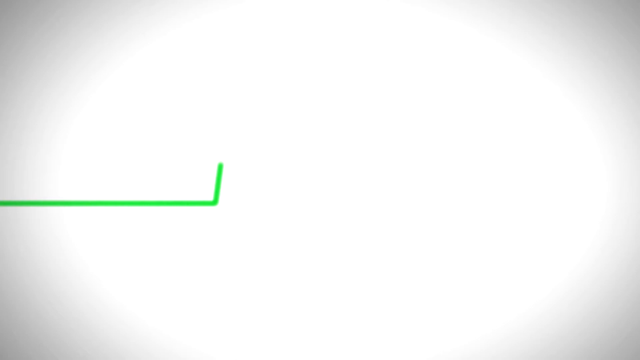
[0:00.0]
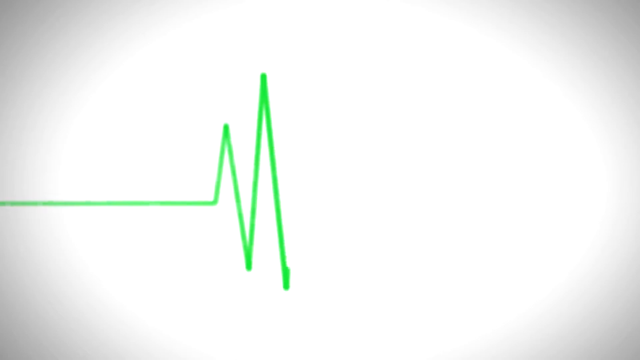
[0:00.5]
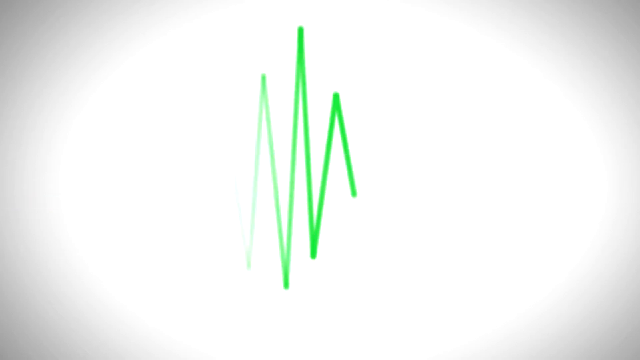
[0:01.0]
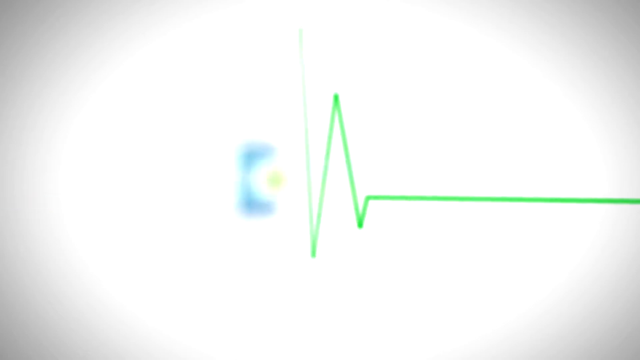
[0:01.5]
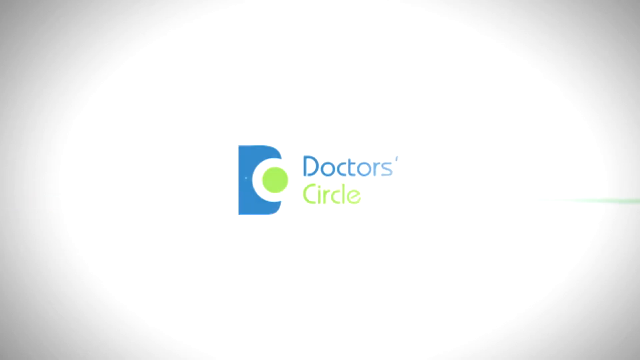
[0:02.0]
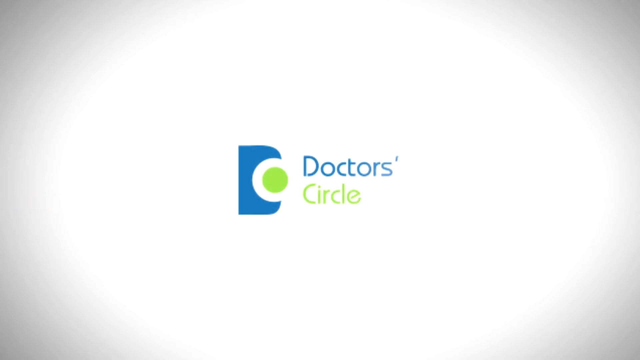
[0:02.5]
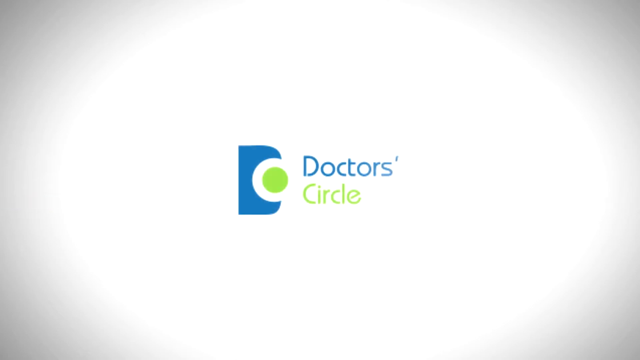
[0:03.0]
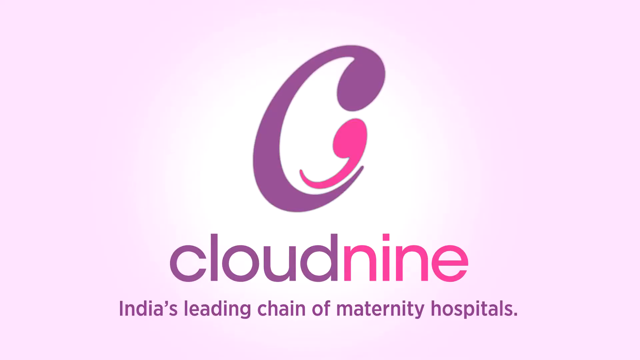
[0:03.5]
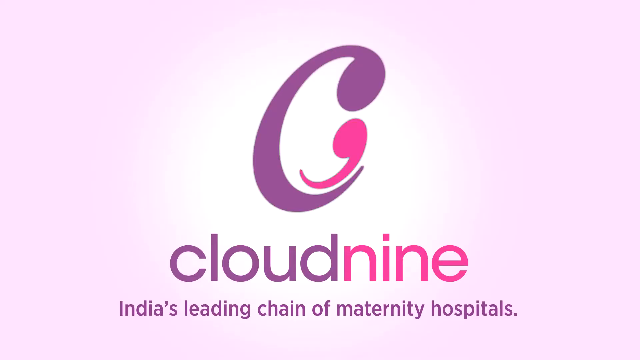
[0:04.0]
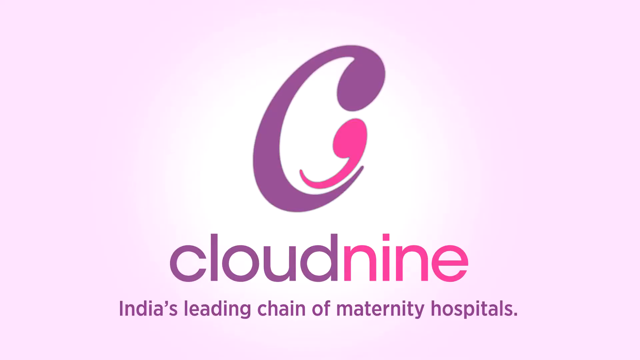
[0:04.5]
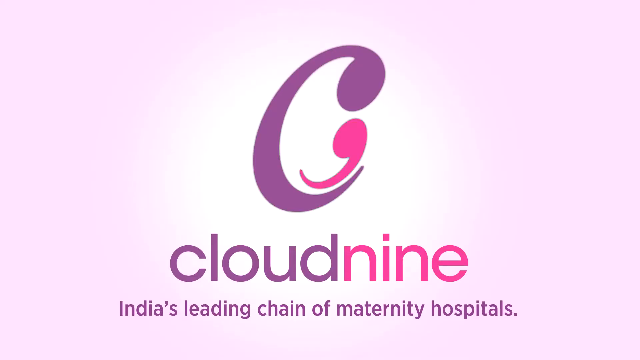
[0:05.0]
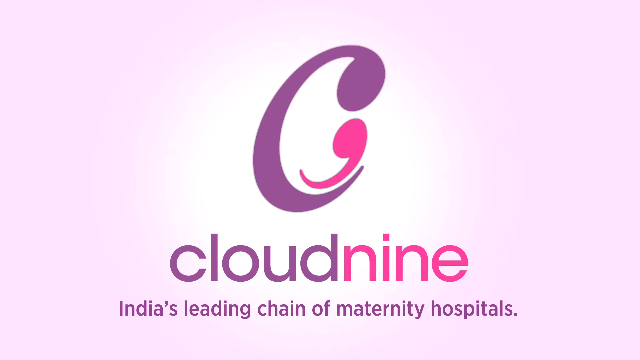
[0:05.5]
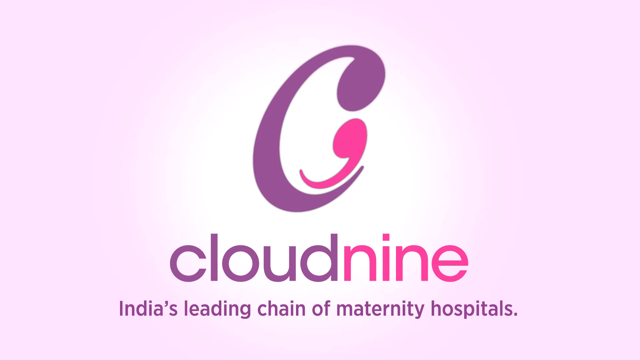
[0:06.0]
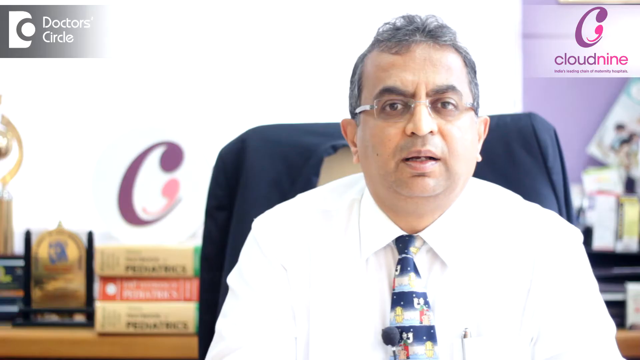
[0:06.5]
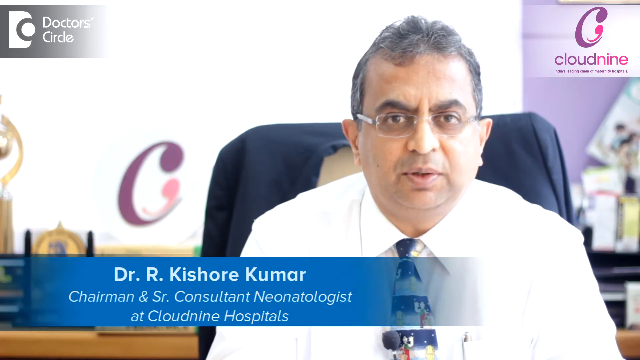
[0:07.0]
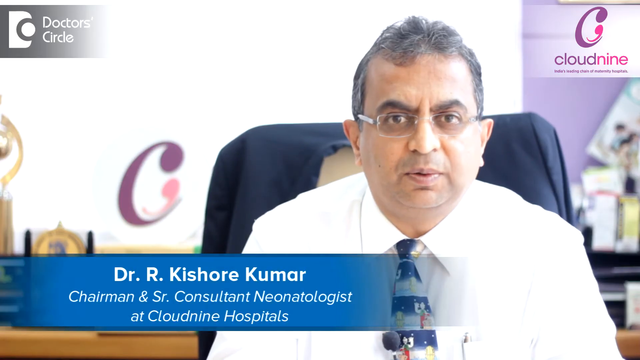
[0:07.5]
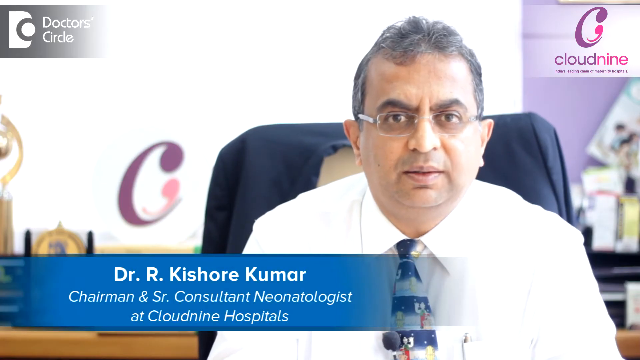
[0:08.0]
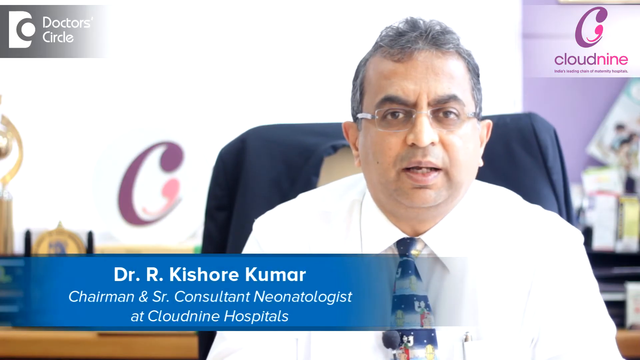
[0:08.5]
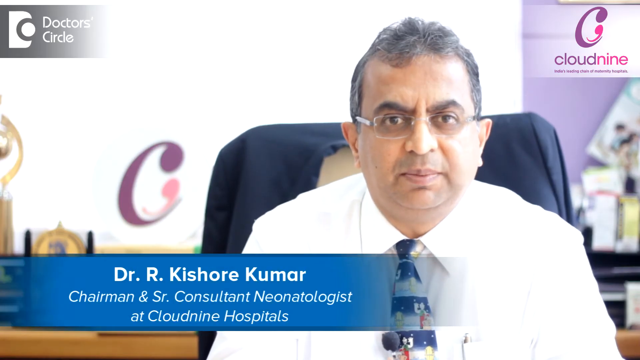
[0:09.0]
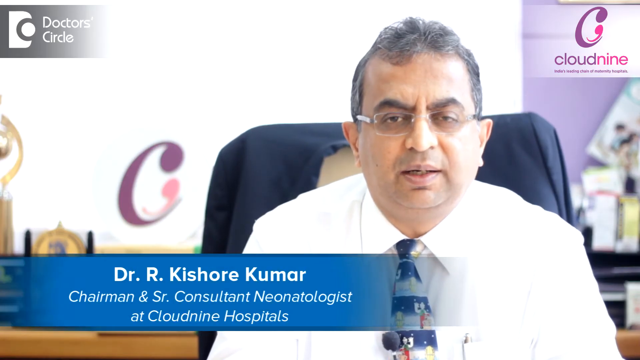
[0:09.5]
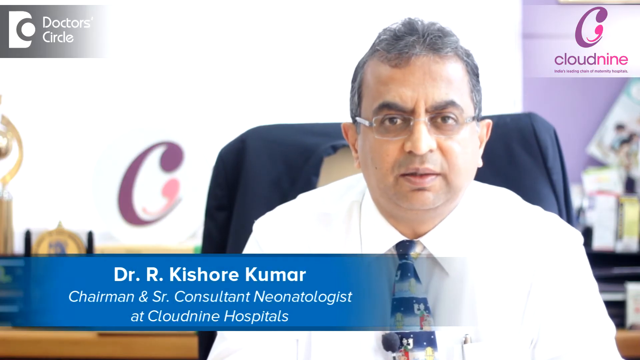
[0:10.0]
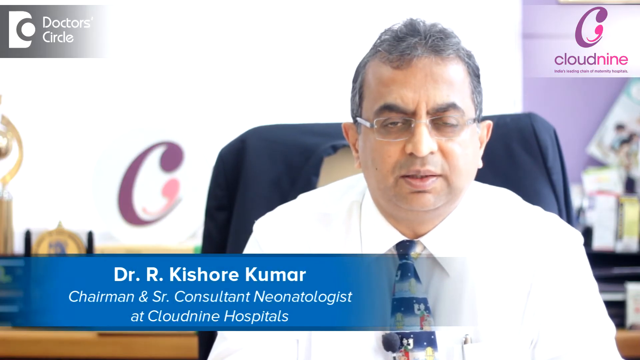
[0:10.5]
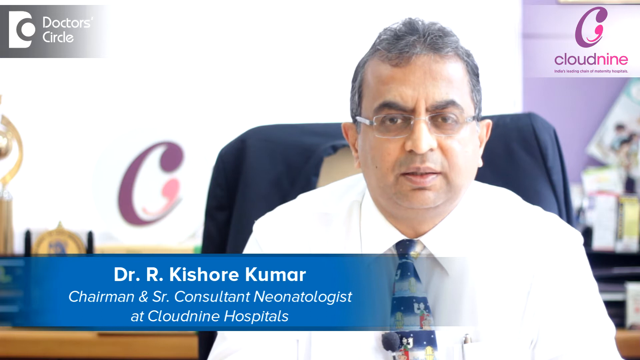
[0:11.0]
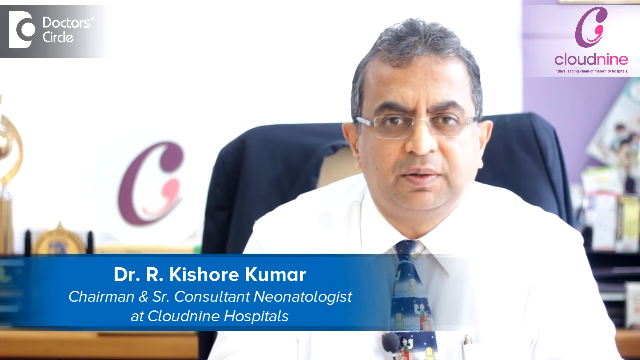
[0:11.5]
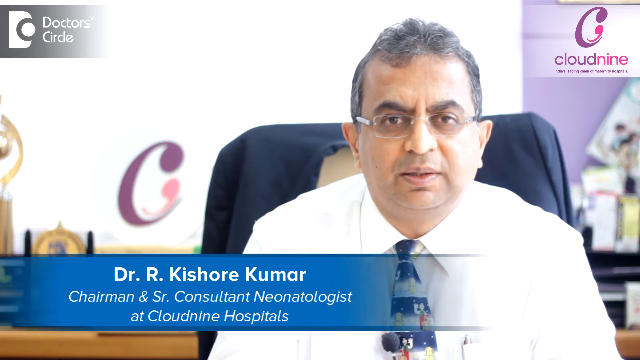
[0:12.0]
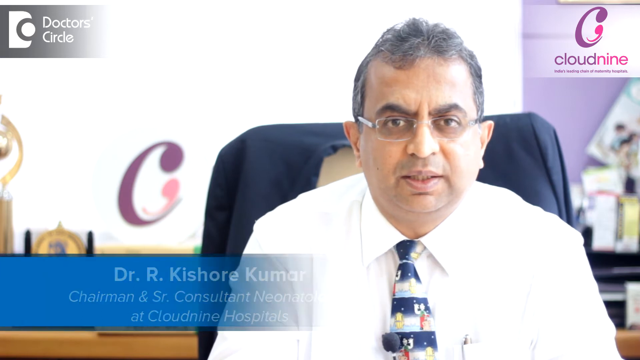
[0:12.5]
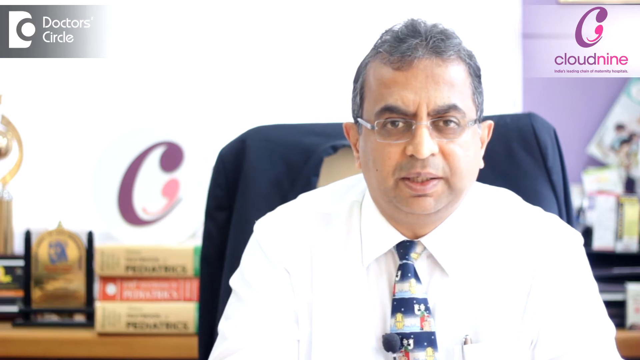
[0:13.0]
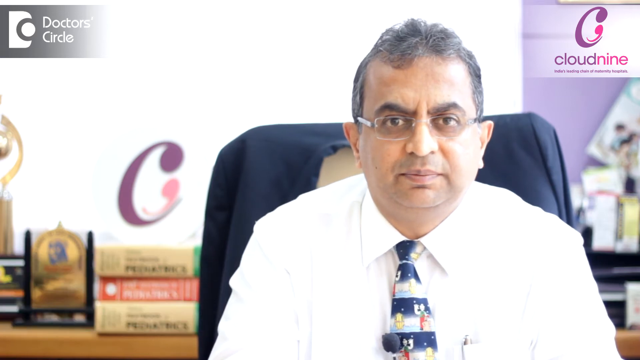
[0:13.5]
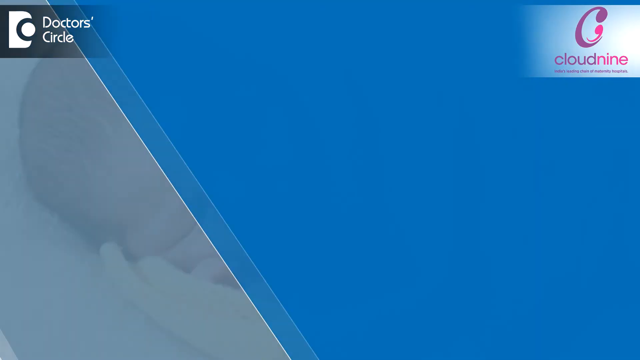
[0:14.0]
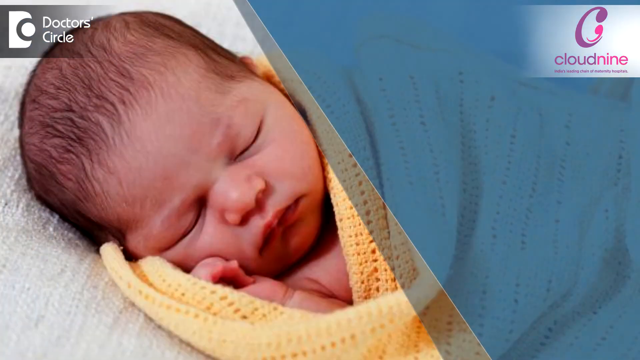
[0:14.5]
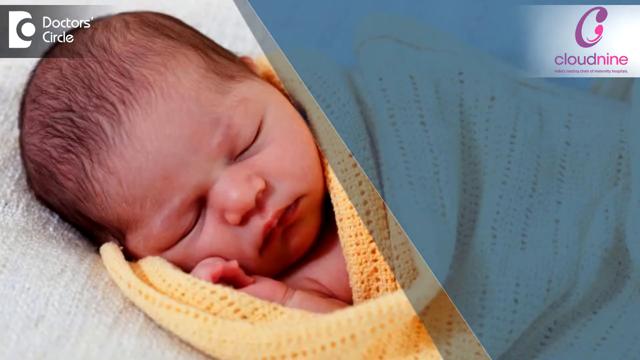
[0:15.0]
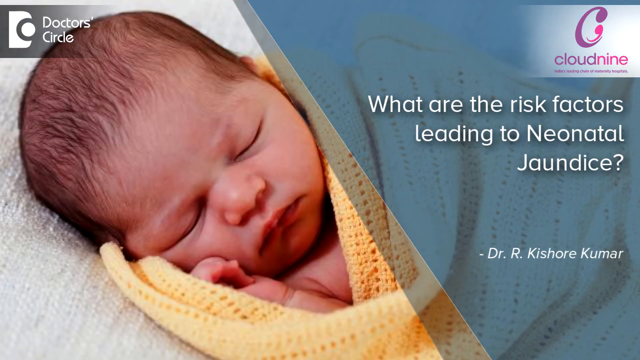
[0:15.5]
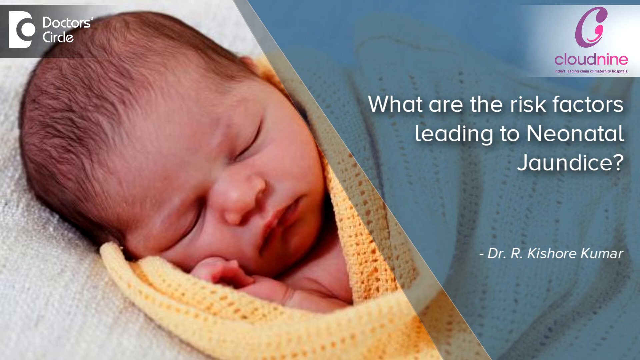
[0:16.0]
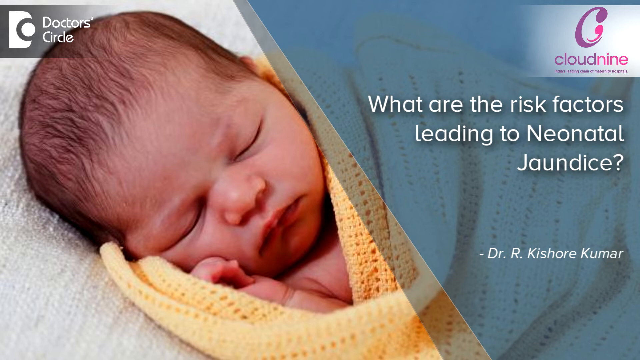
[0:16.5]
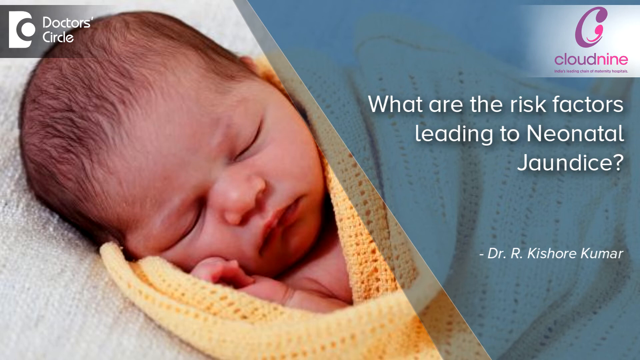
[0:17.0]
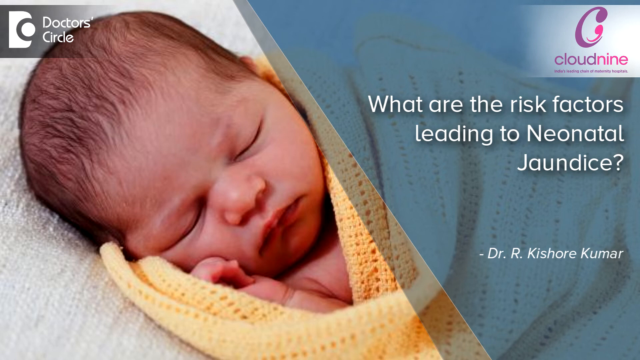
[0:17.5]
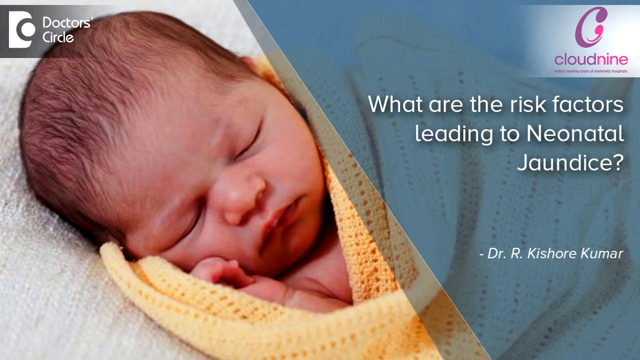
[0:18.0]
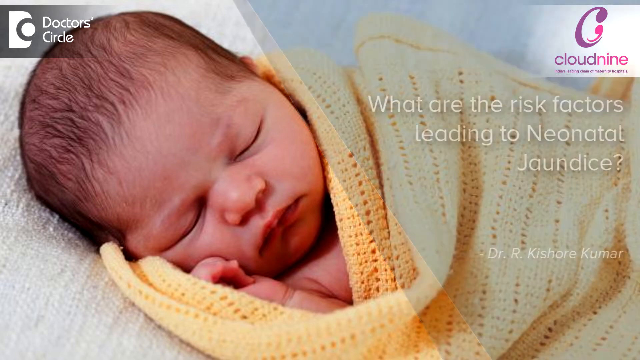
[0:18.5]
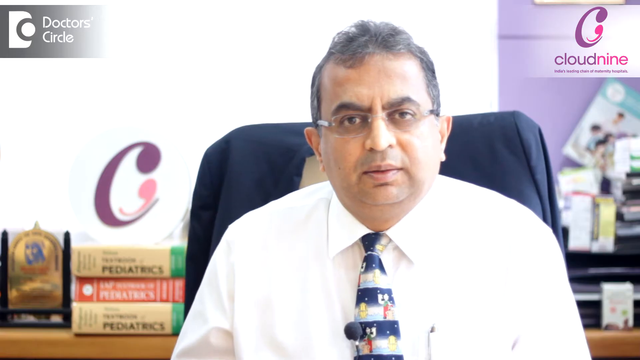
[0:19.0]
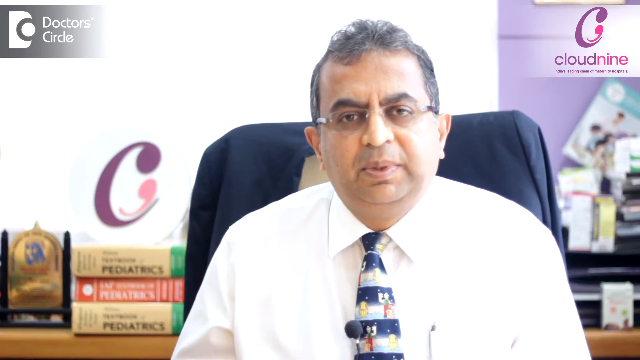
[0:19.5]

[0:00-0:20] A medical video opens on a white background, where a green graphic, kind of like the type seen on a heart monitor, appears briefly. Text in a mixture of blue and green font reads "Doctor's Circle" with a little logo beside it. Next comes a pink background with a purple and pink C; it reads "cloud nine" and underneath "India's leading chain of maternity hospitals." The graphic lingers for a second, and then a gentleman is speaking, visible toward the right side of the frame. In the top right corner is the purple and pink cloud nine logo, and on the left the Doctor's Circle logo, now gray. The man is seated in what looks like a swivel office chair, with his jacket on the back of the chair; he has clear glasses and wears a tie that looks like it has little cartoon characters on it. He appears to be of Indian descent. On the left his name appears: "Dr. R Kishore Kumar, chairman and senior consultant neonatologist at cloud nine hospitals." He speaks to the camera. The video then shows what is kind of like a stock photo, on the left, of an infant kind of swaddled in a yellow, afghan-type blanket. On the right are the cloud nine logo and the text "what are the risk factors leading to neonatal jaundice" followed by "Dr. R Kishore Kumar." After a second it returns to the speaking gentleman; some books are visible behind his chair in the background.